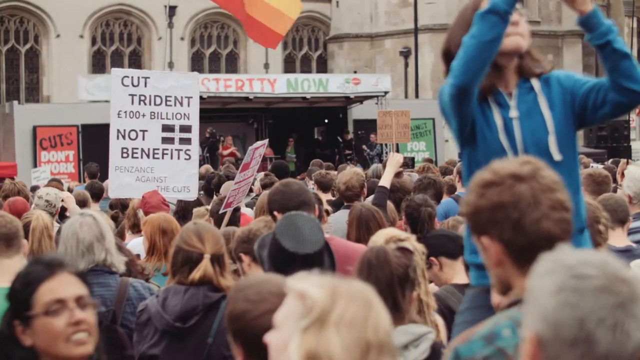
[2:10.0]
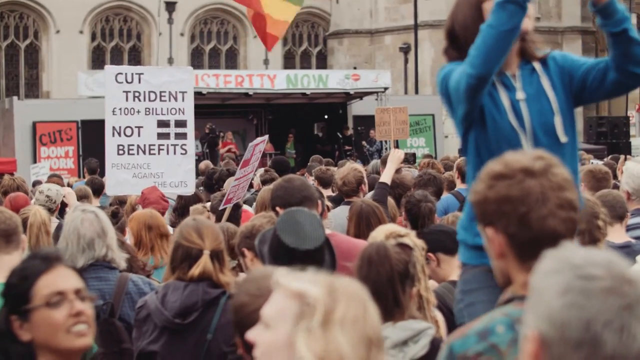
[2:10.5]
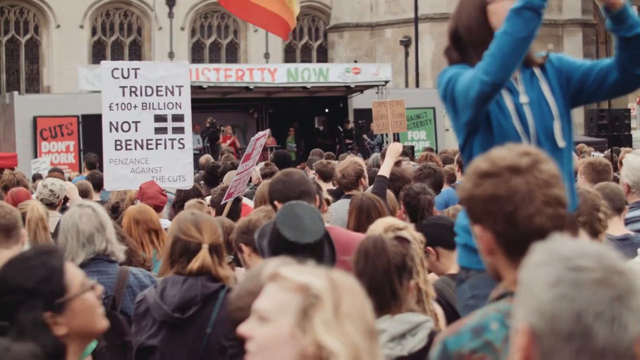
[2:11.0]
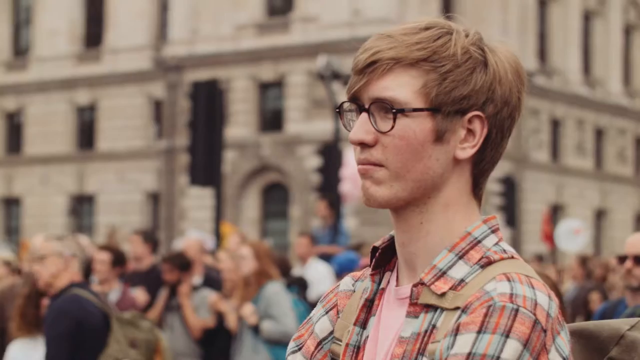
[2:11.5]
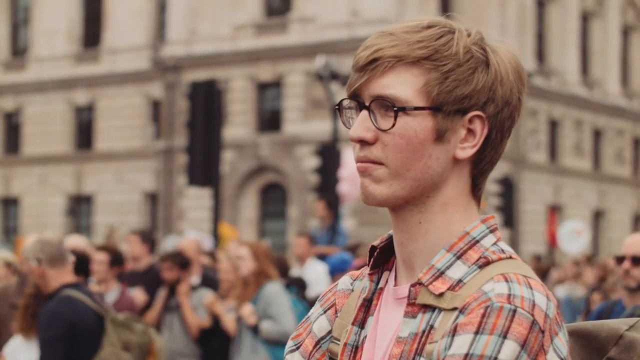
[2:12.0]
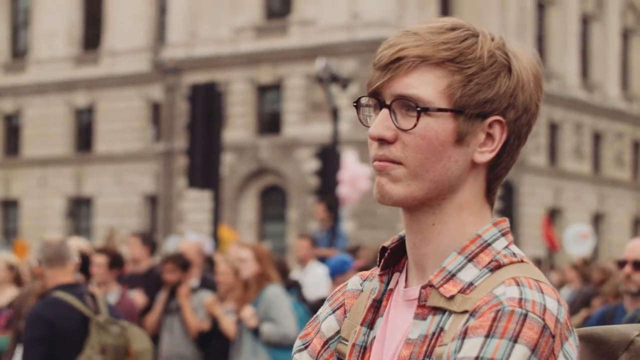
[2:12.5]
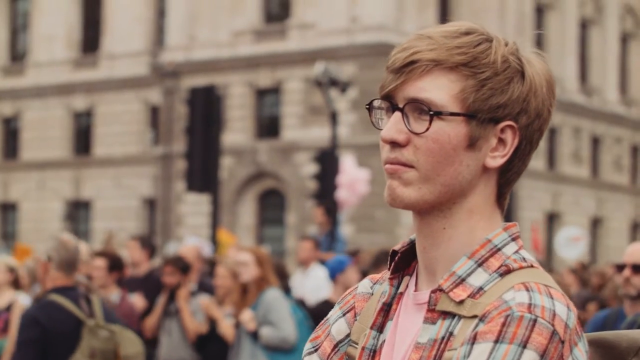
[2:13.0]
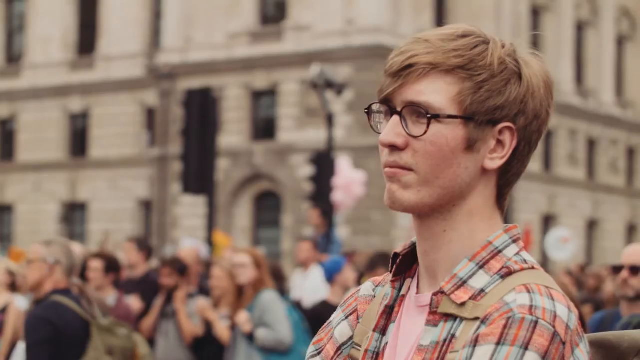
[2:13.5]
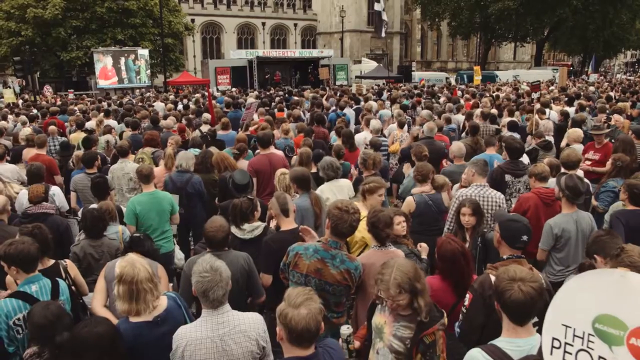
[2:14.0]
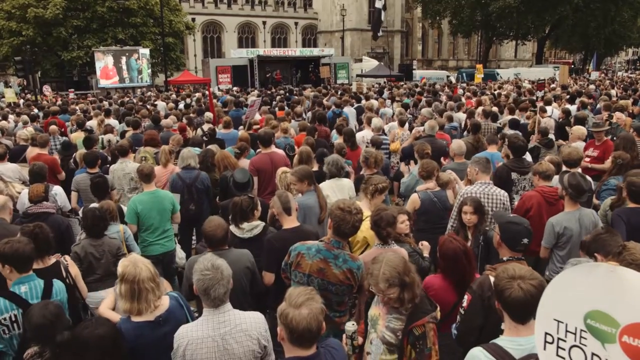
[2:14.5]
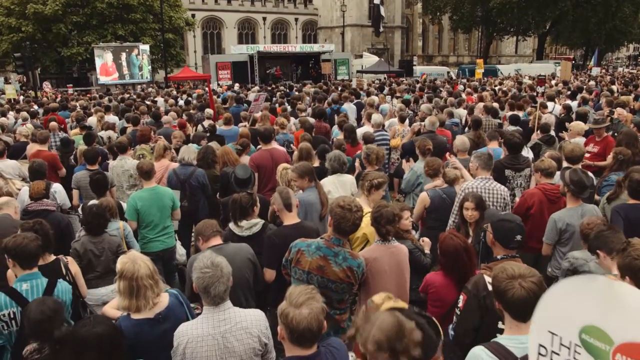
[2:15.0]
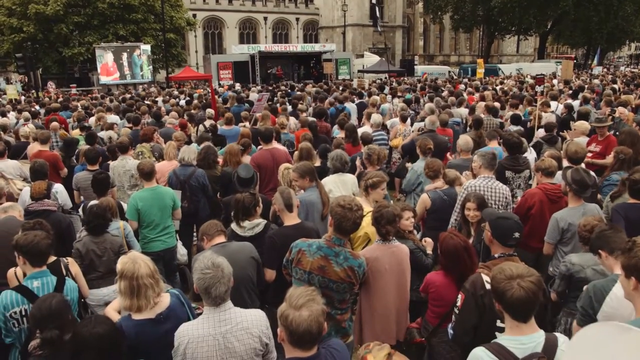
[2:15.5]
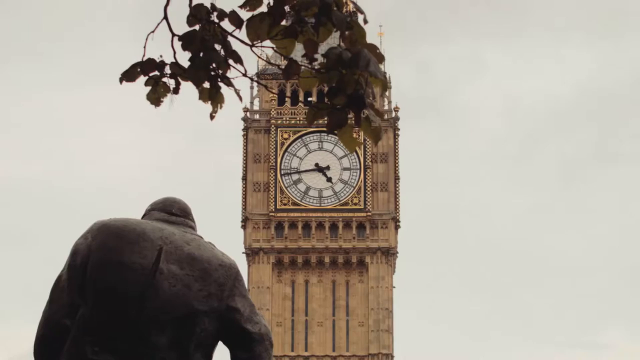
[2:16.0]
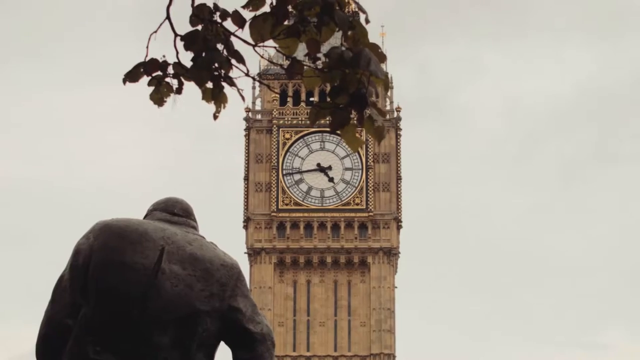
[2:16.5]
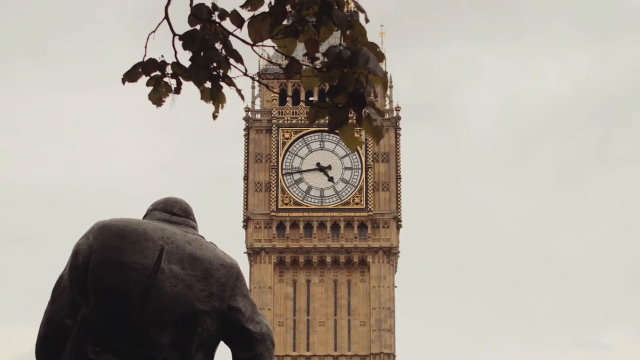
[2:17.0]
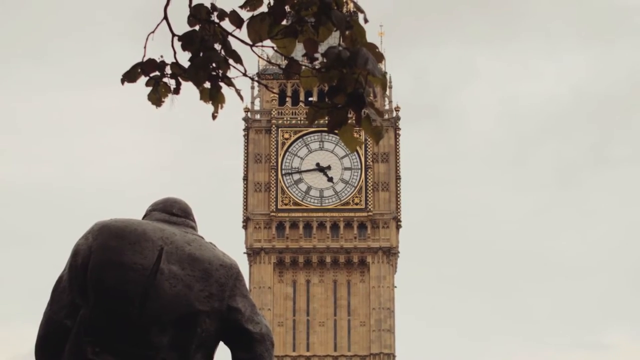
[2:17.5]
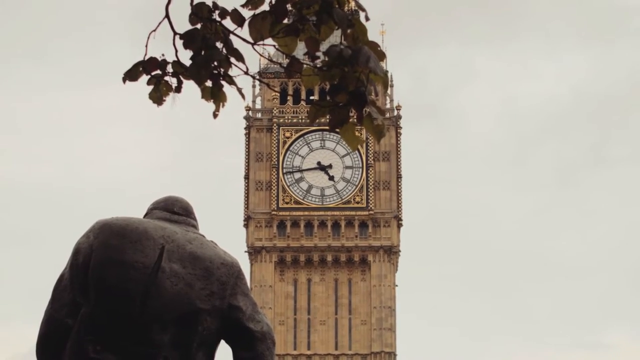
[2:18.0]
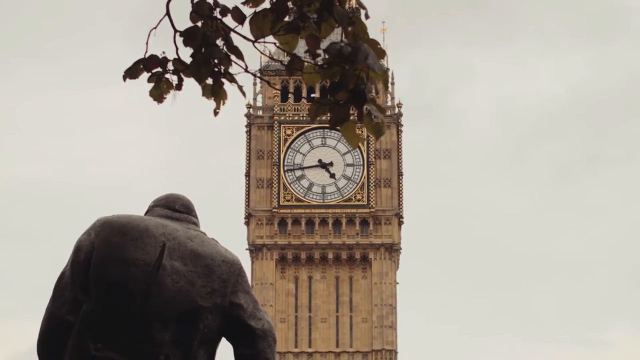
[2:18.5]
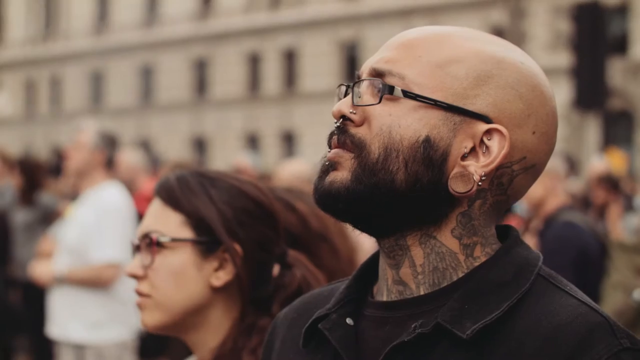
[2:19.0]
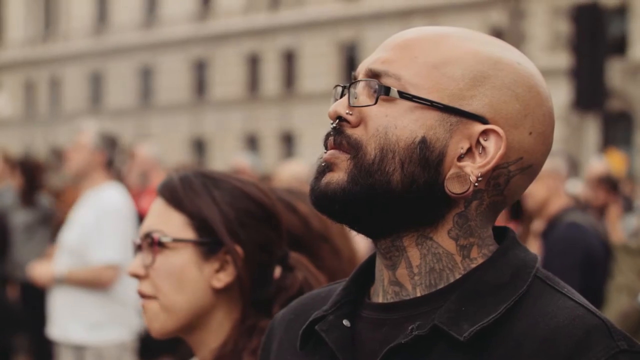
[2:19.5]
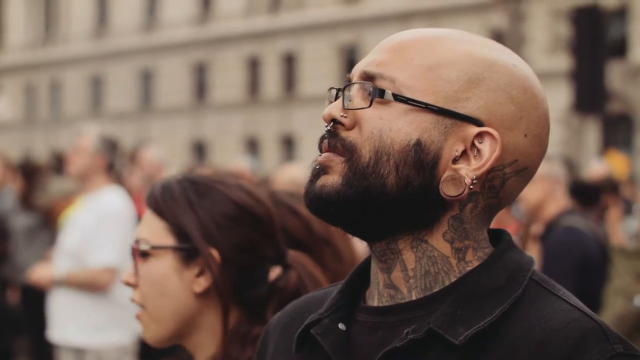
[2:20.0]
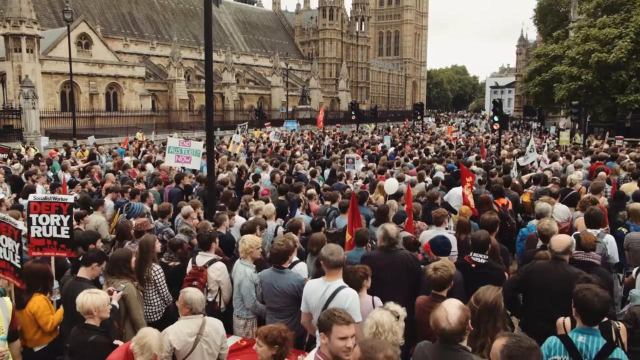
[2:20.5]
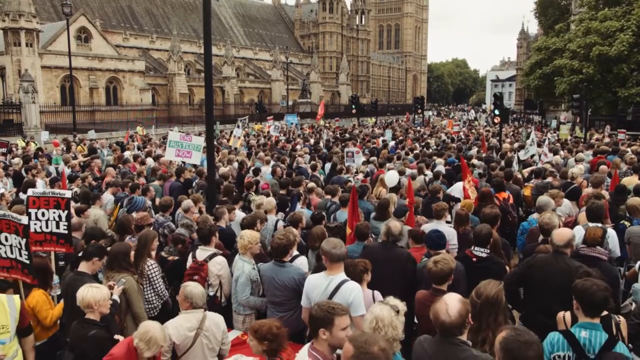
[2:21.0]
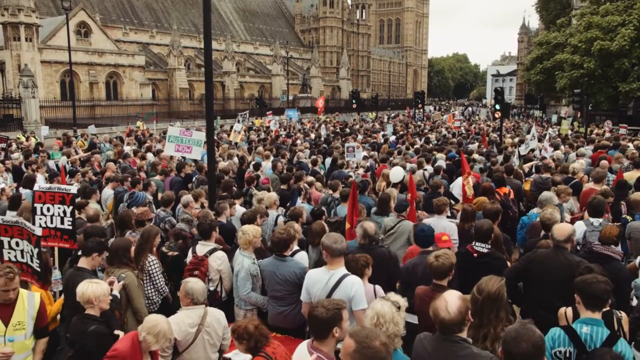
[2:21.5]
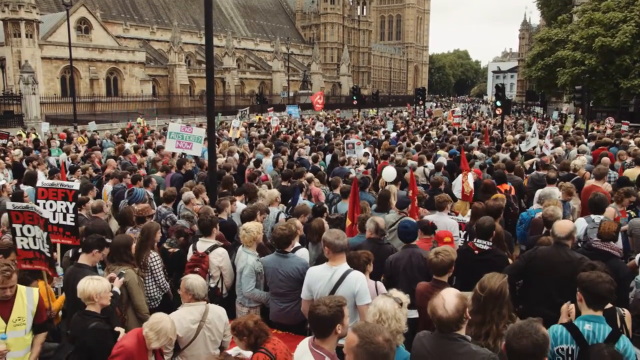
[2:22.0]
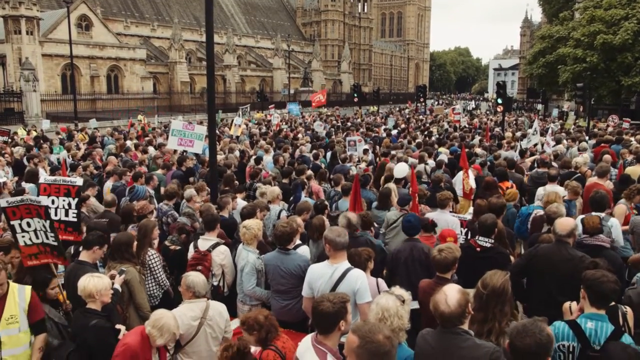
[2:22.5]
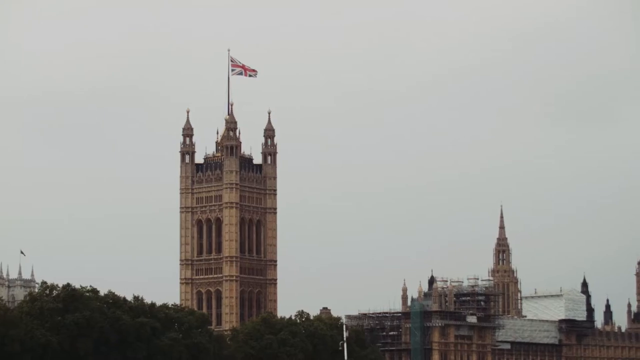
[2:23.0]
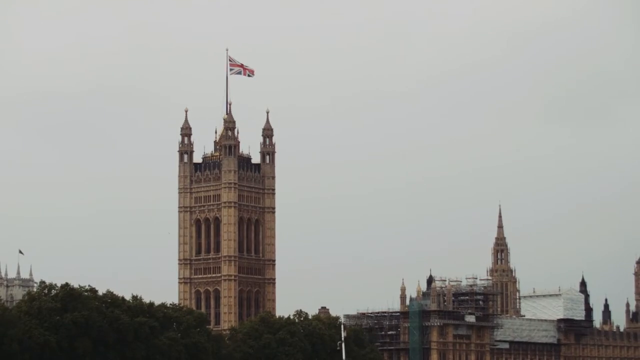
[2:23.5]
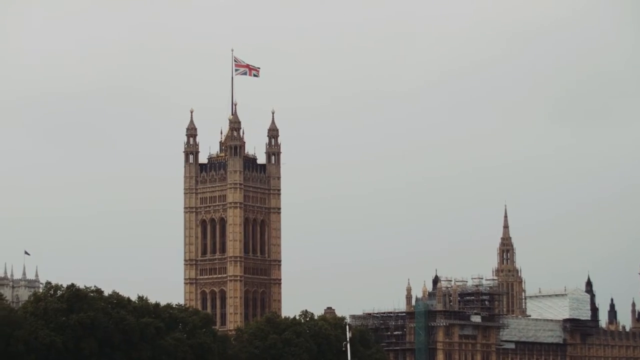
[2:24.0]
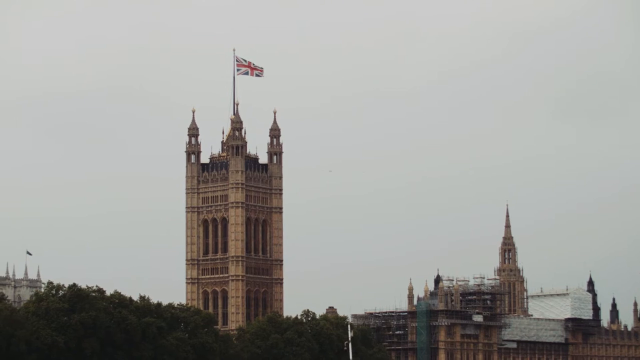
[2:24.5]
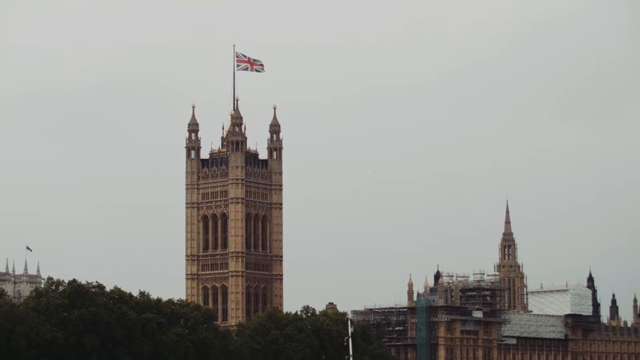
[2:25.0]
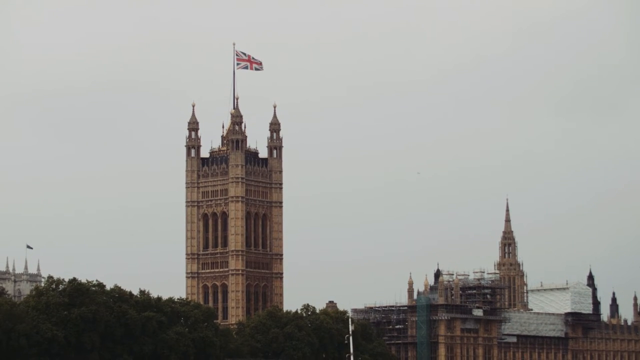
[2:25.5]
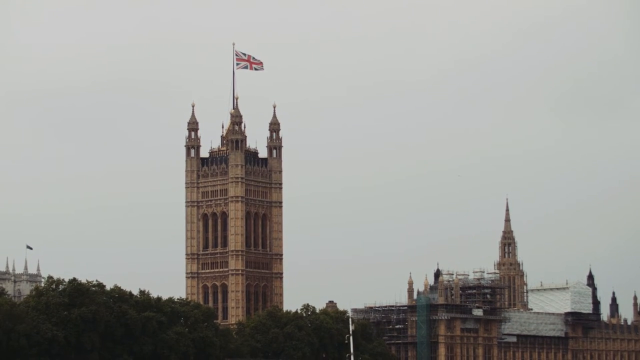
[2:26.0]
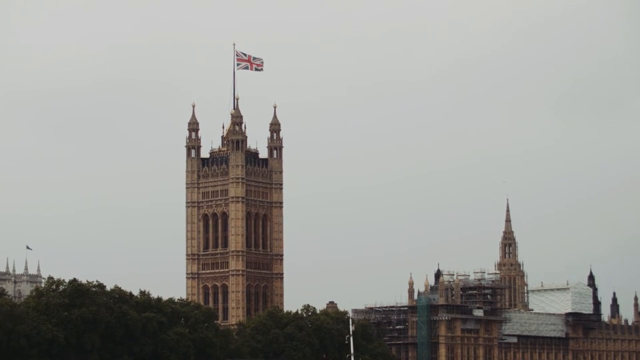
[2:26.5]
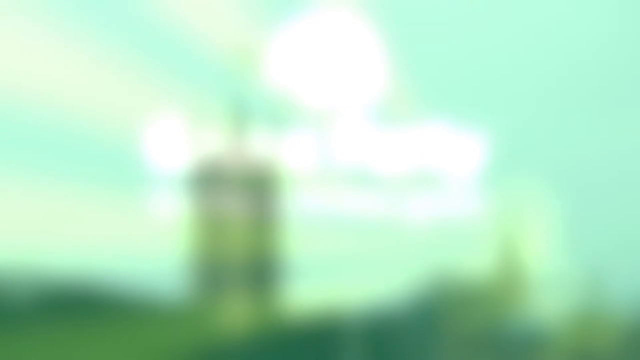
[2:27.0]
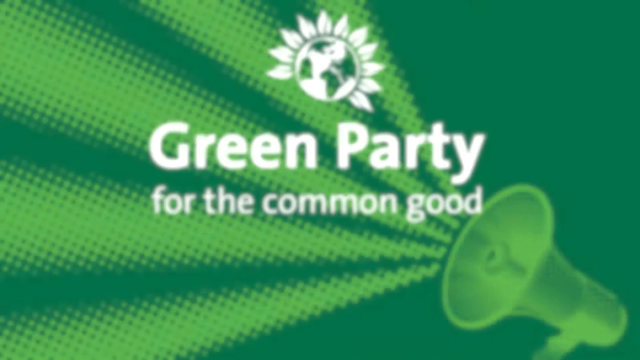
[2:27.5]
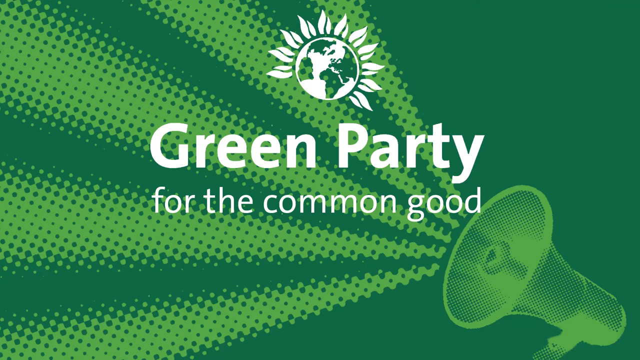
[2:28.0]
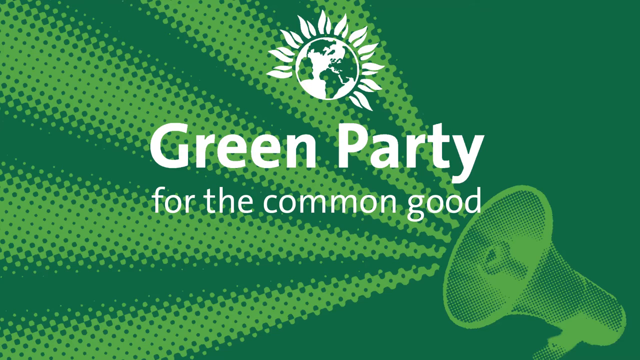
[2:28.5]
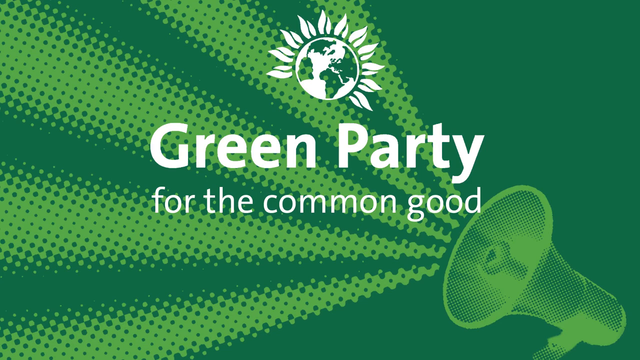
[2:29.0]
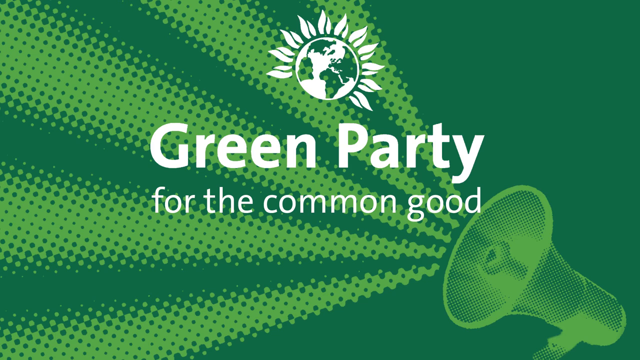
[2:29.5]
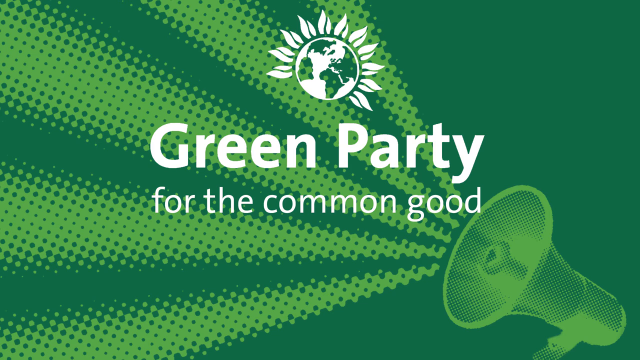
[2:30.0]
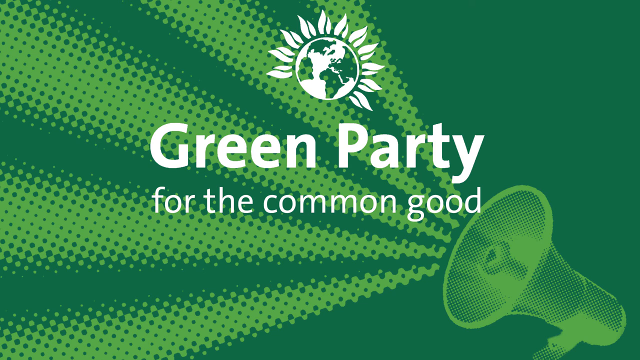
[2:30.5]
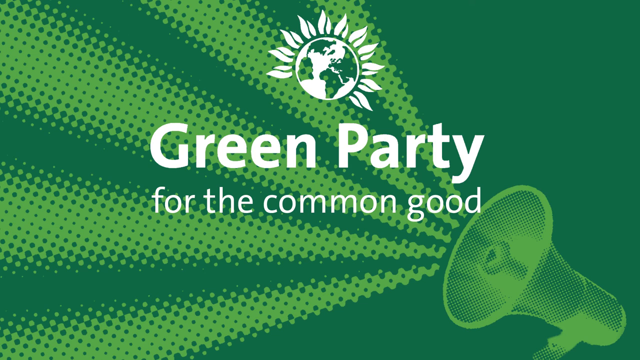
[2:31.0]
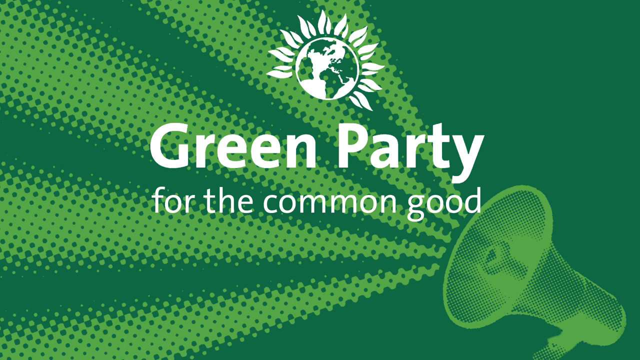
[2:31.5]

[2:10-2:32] What appears to be a young woman, probably on a platform, wears prescription glasses and has dark auburn hair. She wears a blue hoodie, zipped up, with white strings around her shoulders, and she seems to be motioning with her cell phone, apparently taking a picture of something above; she faces the camera. Below her, many people hold placards. One reads "cut Trident 100 plus billion pounds, not benefits. Penzance against the cuts." "End austerity now" appears on one of the government buildings in front of them. Another placard reads "cuts don't work." Most of the crowd is Caucasian, a mix of young and older people, with mostly blonde or red-auburn hair, few with black hair and some with grayish hair. A white Caucasian man with black-rimmed prescription glasses looks intently ahead; he wears a multicolored plaid shirt and a backpack with mocha-colored straps and has dark brown, somewhat blondish hair. The camera pans to the crowd, many wearing green, possibly blue, red and white. This seems to be the end point of the march, with a small stage in front of the gathered crowd.